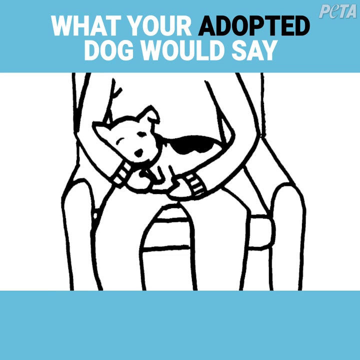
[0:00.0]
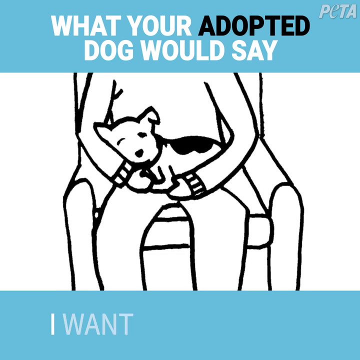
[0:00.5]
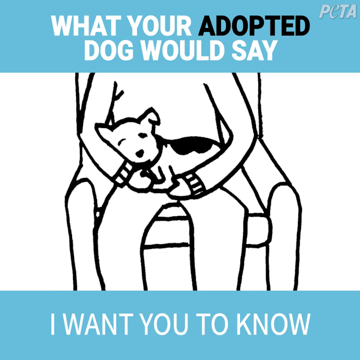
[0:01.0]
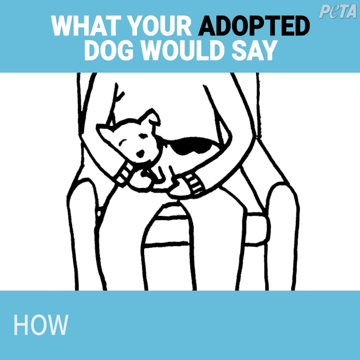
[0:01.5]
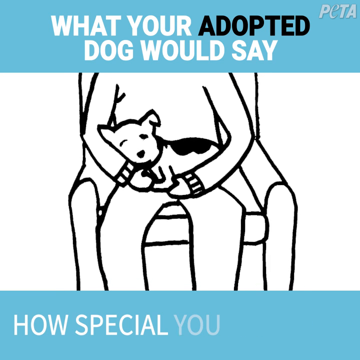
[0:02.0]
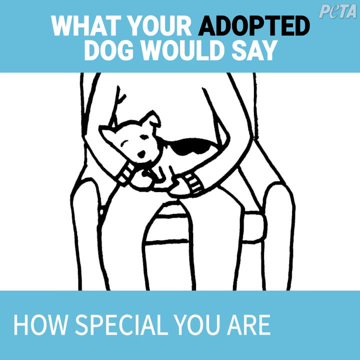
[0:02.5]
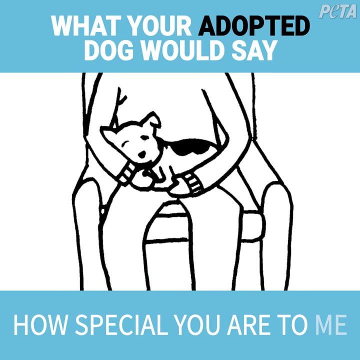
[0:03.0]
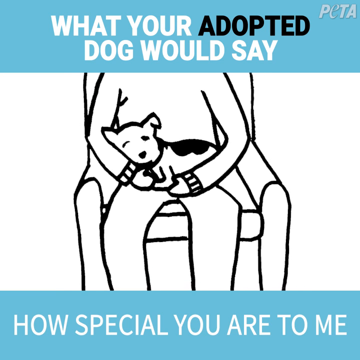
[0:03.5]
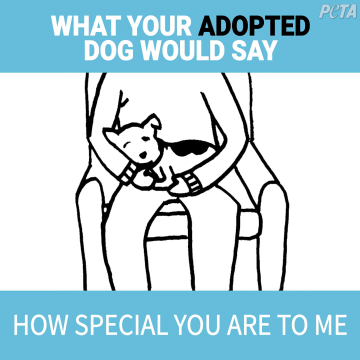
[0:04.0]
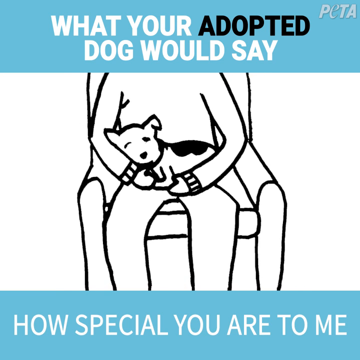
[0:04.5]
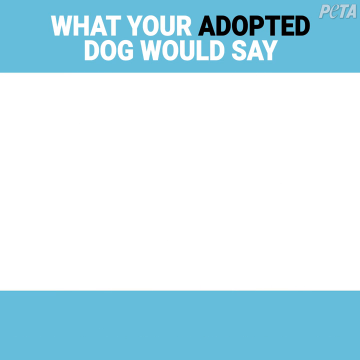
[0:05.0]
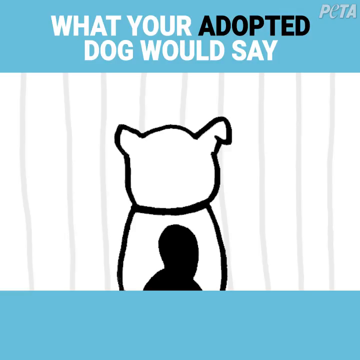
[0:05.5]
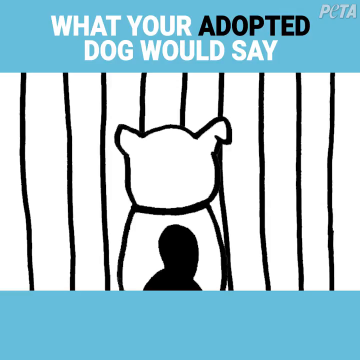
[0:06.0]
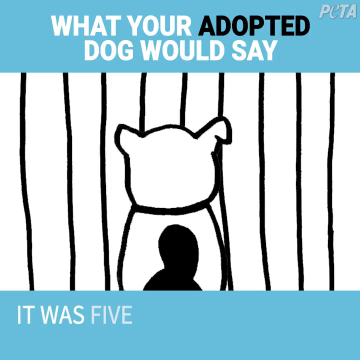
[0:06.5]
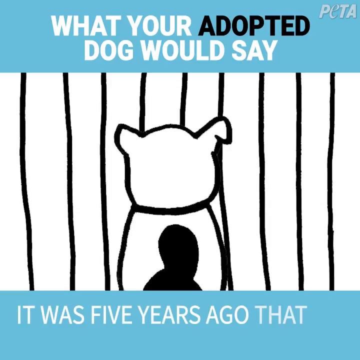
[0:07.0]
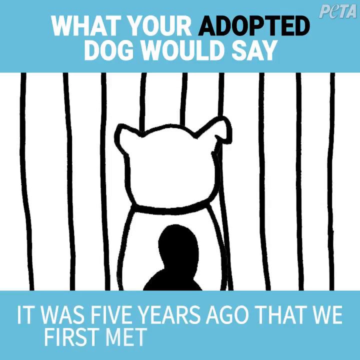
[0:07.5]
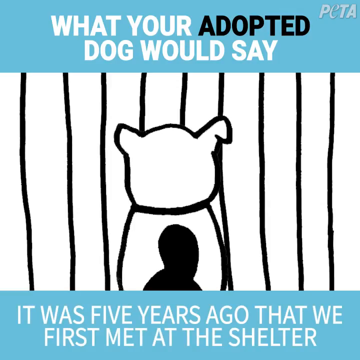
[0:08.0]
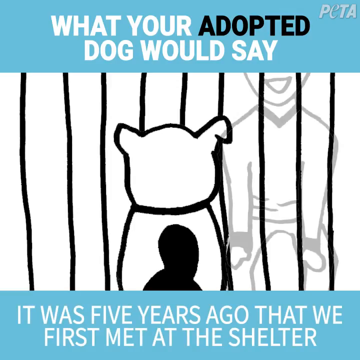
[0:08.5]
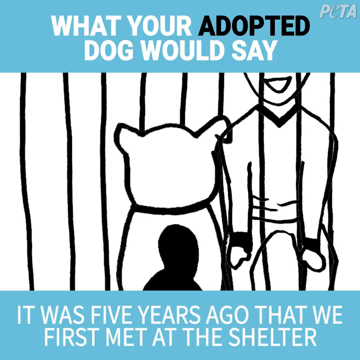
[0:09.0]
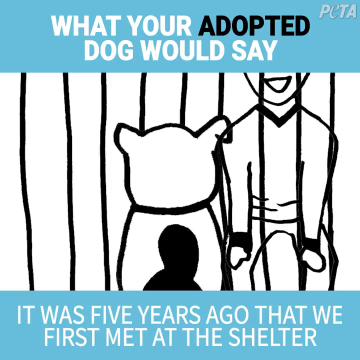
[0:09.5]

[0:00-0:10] Text at the top on a blue background reads "what your adopted dog would say"; the word "adopted" is in black while the rest of the text is in white. The PETA logo is in the top left-hand corner. In the middle section is a drawing of the body of a human sat in a chair, holding a small dog with some black spots on it. At the bottom is a blue area where text starts being written, asking how special you are to me. The image transitions into a drawing of a dog that looks like it is behind some bars, in a shelter, with text at the bottom. A person then comes up in the drawing with a smiley face towards the dog.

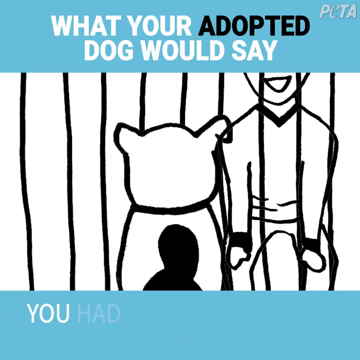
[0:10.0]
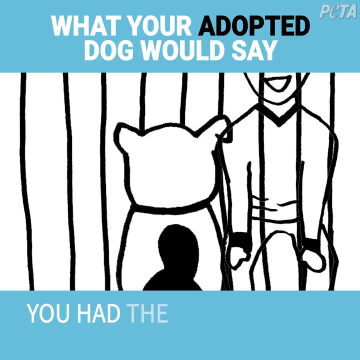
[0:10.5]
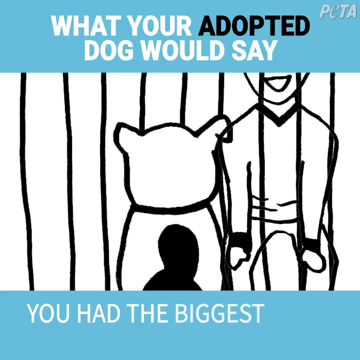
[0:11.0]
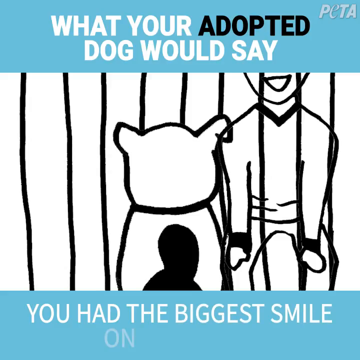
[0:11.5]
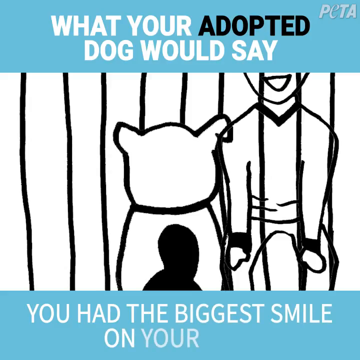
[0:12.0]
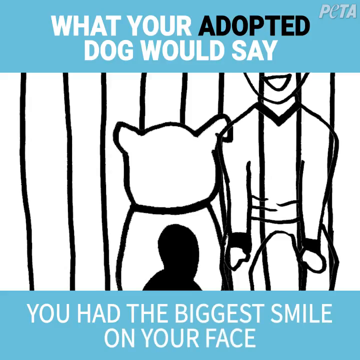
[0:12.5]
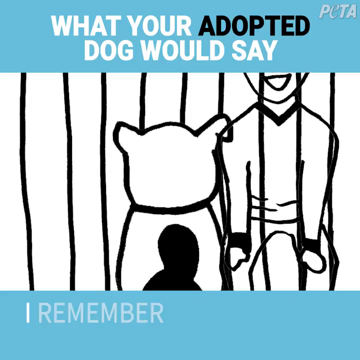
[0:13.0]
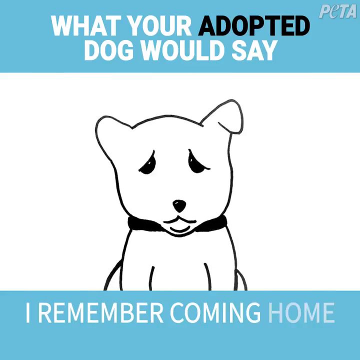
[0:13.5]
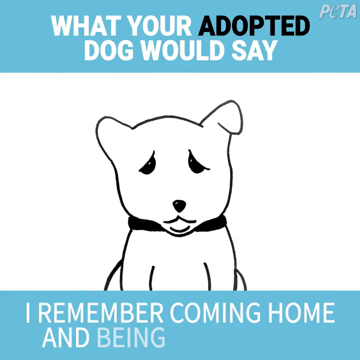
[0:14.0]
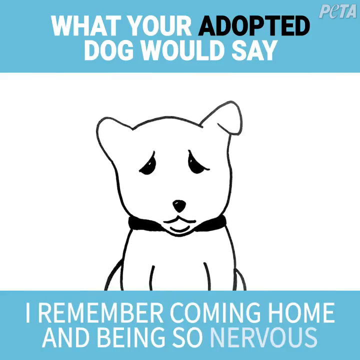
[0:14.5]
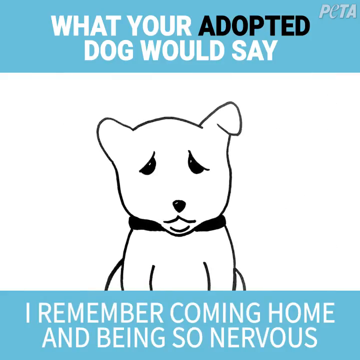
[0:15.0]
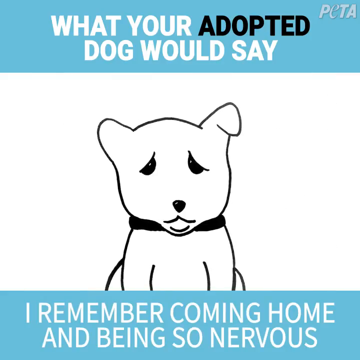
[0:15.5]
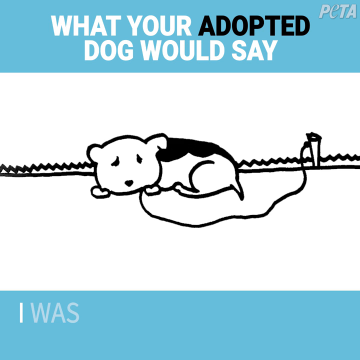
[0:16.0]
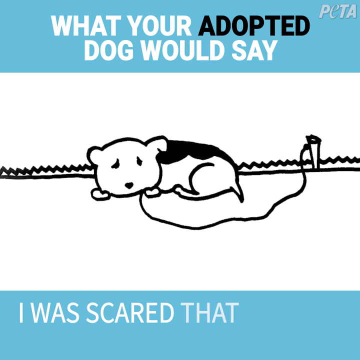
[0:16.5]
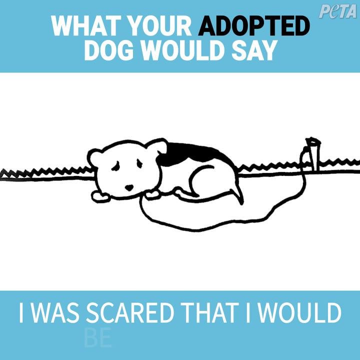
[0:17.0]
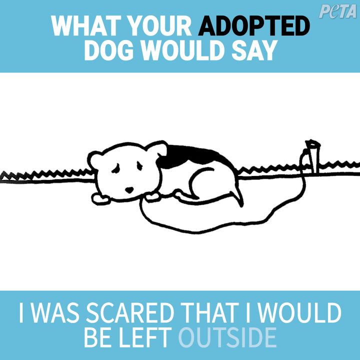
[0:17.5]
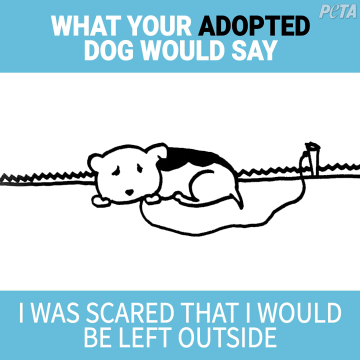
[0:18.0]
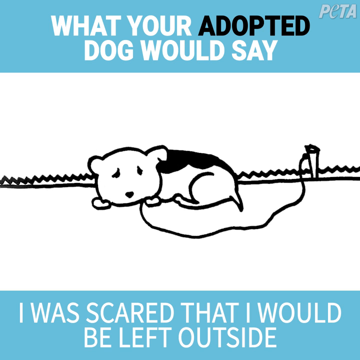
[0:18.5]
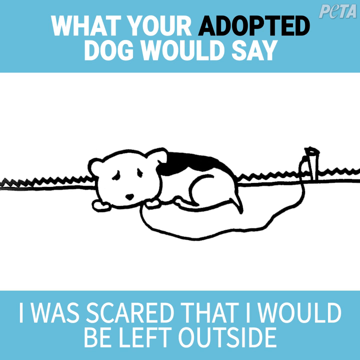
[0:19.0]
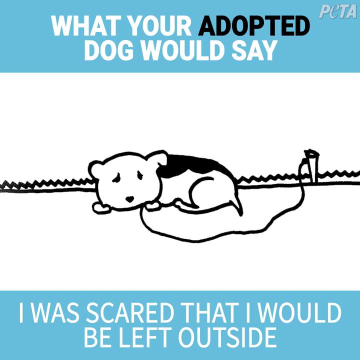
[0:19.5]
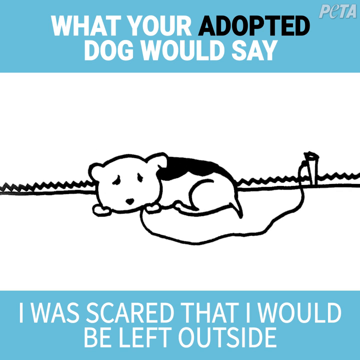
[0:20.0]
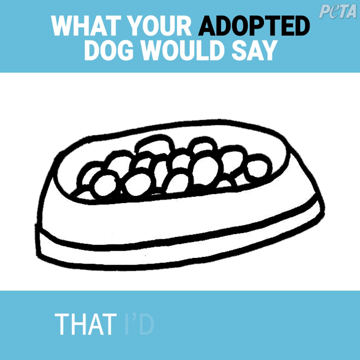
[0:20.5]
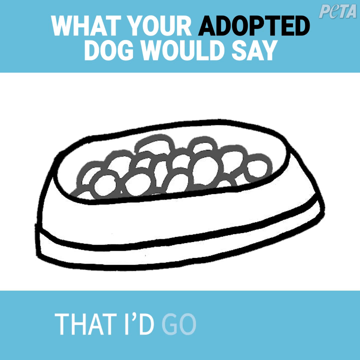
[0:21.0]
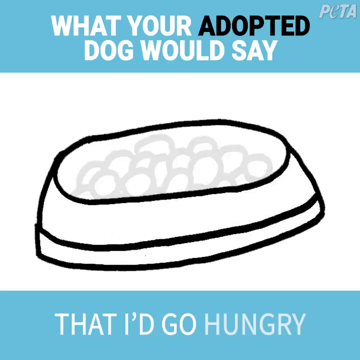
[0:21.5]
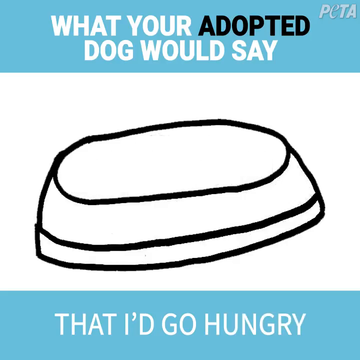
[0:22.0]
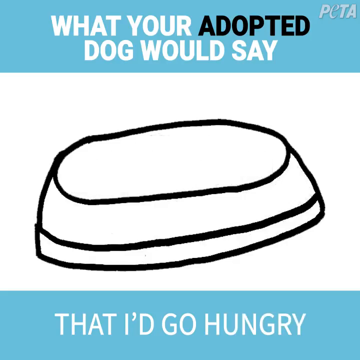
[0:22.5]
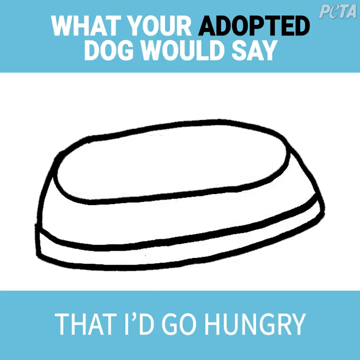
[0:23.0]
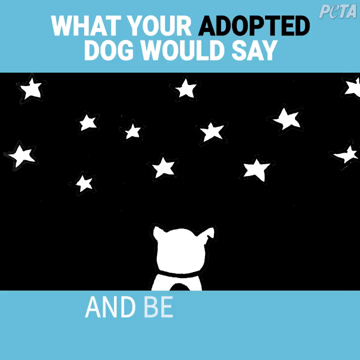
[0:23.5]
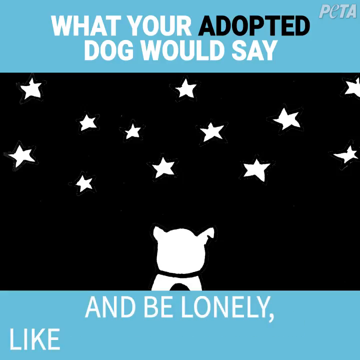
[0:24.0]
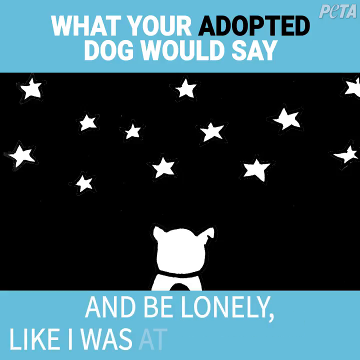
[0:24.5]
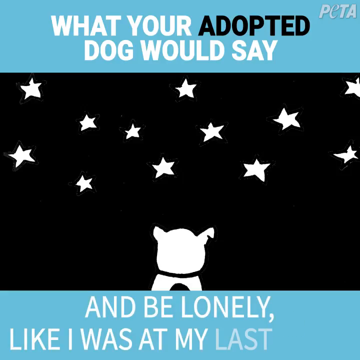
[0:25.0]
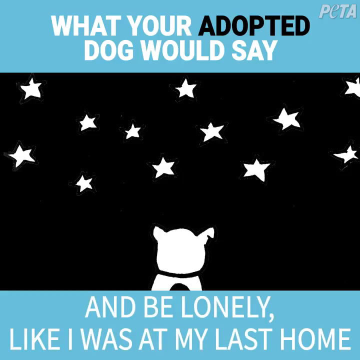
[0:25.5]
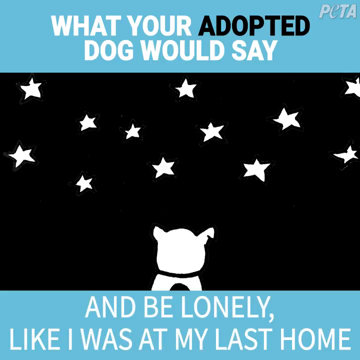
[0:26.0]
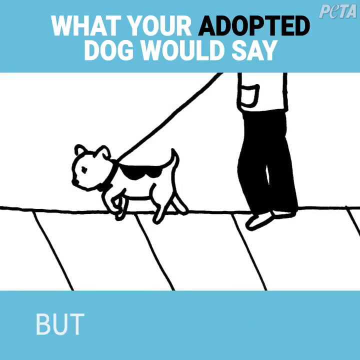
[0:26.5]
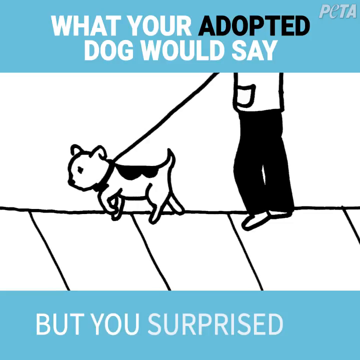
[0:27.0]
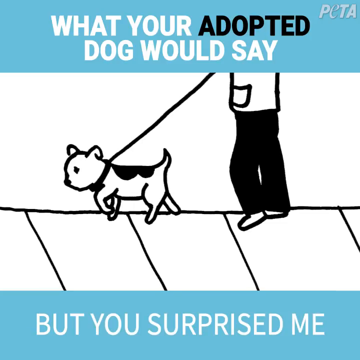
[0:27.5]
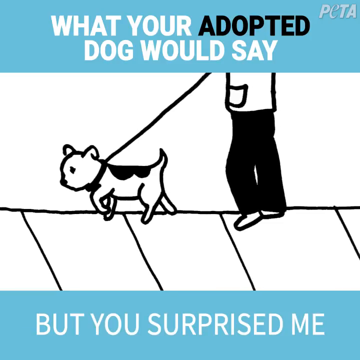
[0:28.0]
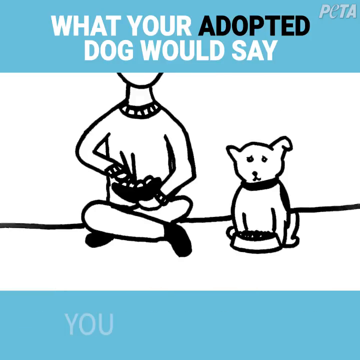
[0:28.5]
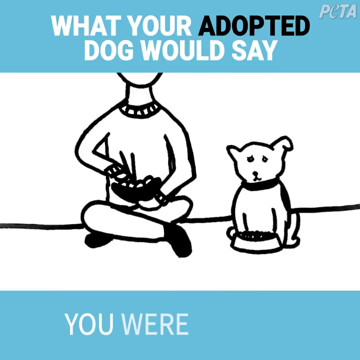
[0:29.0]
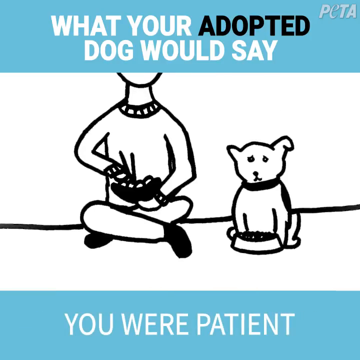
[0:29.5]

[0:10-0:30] The text "what your adopted dog would say" is at the top, taking up about a fifth of the screen in a blue box. In the blue part at the bottom of the screen, text looks like it is being typed. In the middle is a very basic drawing, like something a child could do, of the person on the other side of the bars, with the back of the dog facing the person who has come up to it. Another drawing on a white background shows a little dog looking quite sad, with sorrow in its eyes; one ear points up and the other points down, and it wears a black dog collar of sorts. Next, a drawing shows a dog lying down with a piece of rope or something coming from its neck where it has been tied up, apparently lying on some grass. The text at the bottom shows various things the dog might be thinking. A basic drawing of a bowl of dog food follows, with many white circles representing the food, which then disappear. A night-time drawing has a black background with white stars being drawn in and the back of a dog looking up at the stars. Another basic drawing shows a dog being walked on a leash, with only the bottom half of the human visible, wearing black trousers. Finally, the person and the dog sit down, both eating.